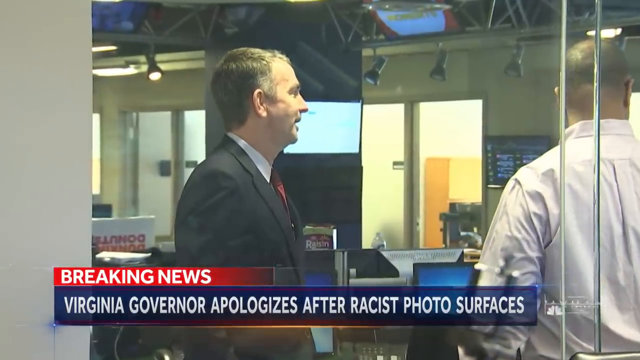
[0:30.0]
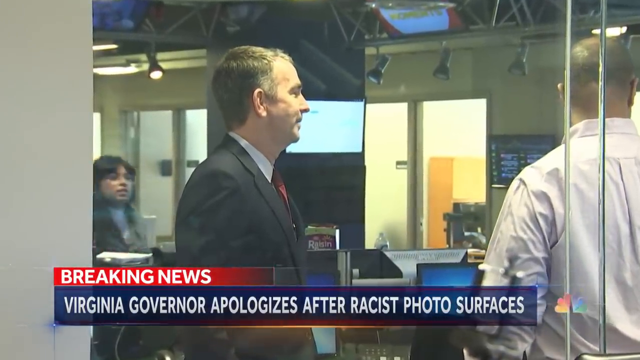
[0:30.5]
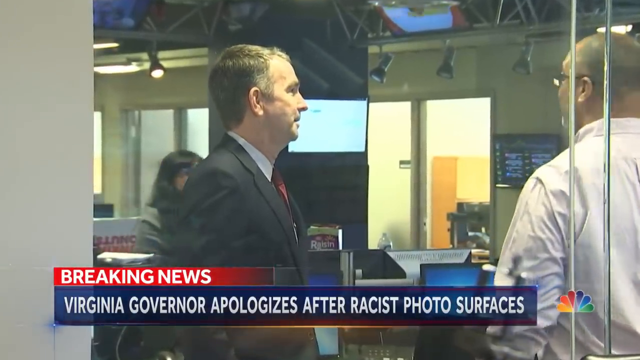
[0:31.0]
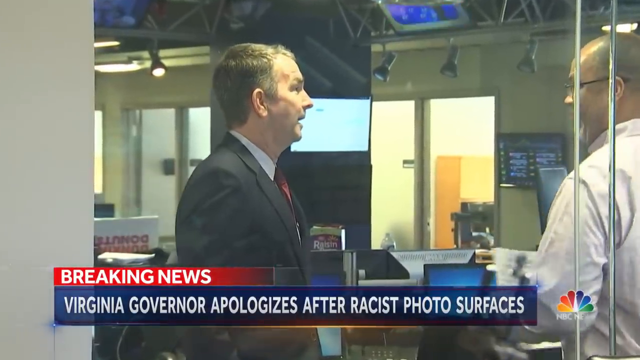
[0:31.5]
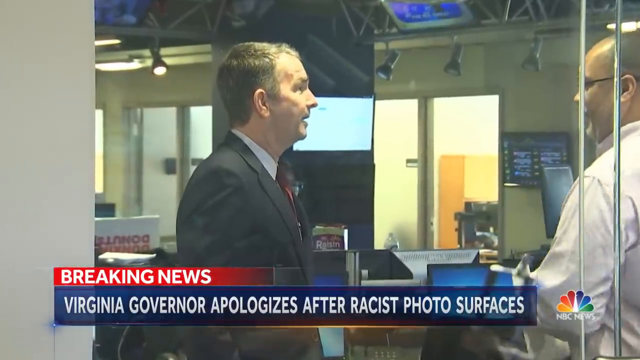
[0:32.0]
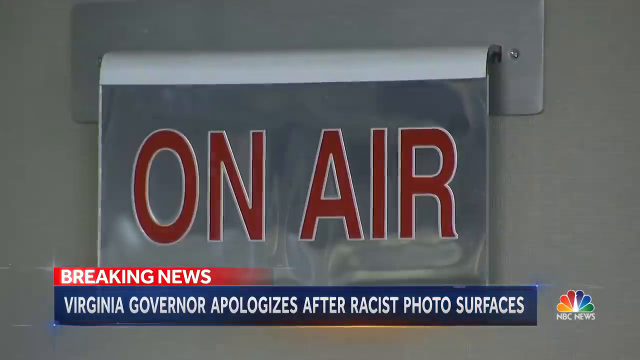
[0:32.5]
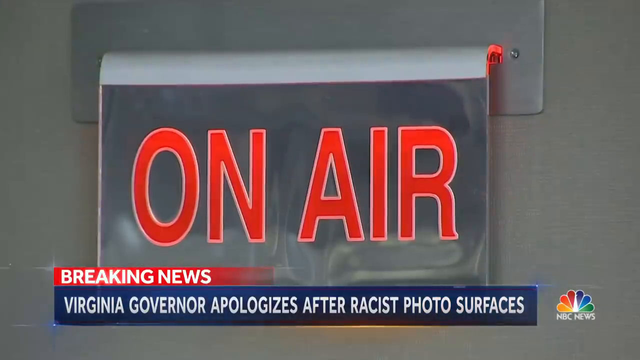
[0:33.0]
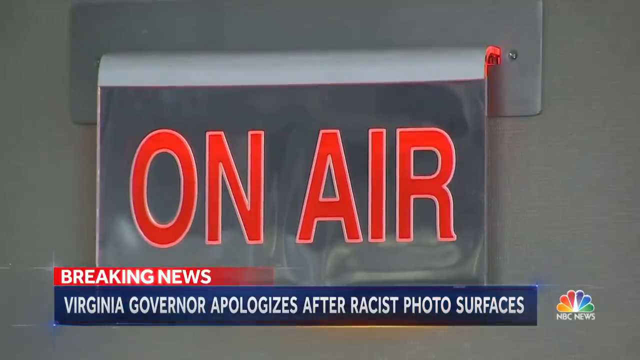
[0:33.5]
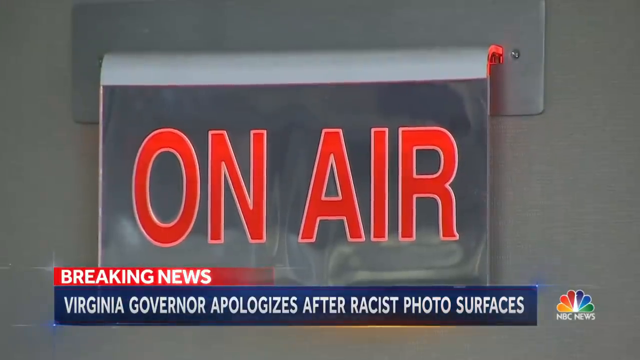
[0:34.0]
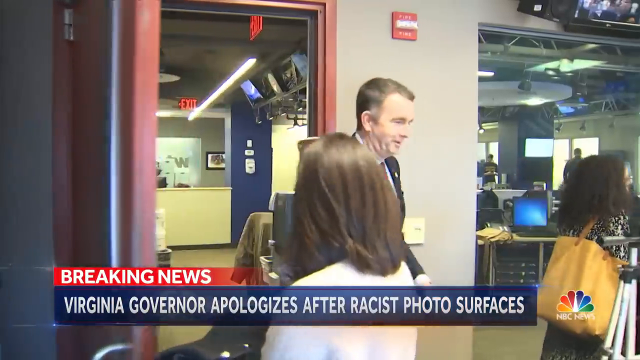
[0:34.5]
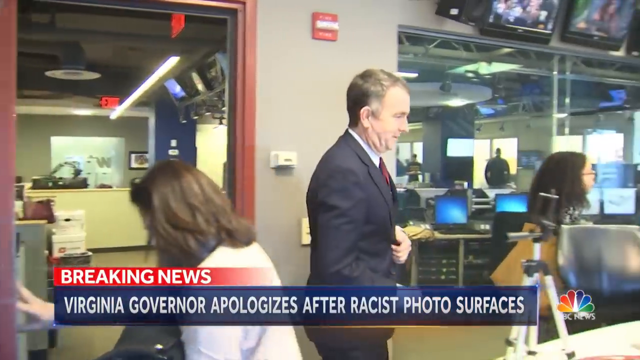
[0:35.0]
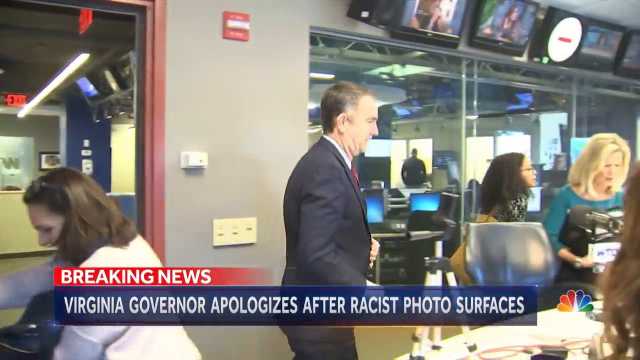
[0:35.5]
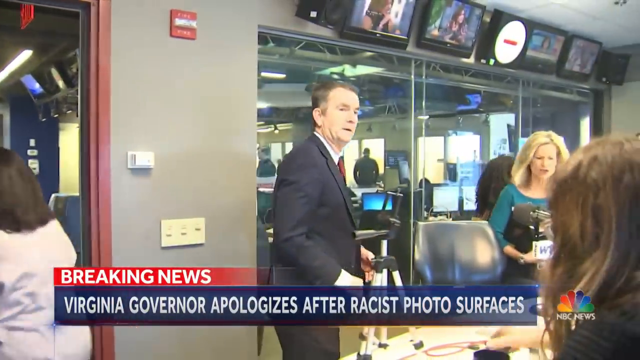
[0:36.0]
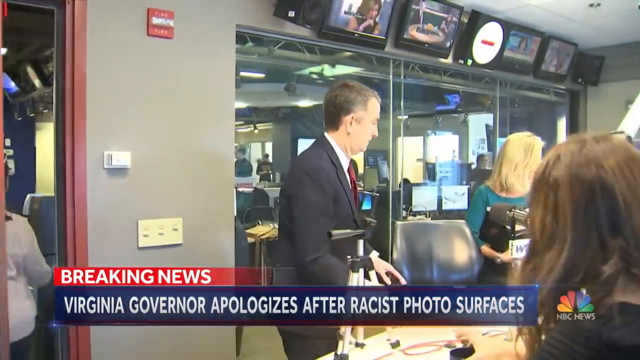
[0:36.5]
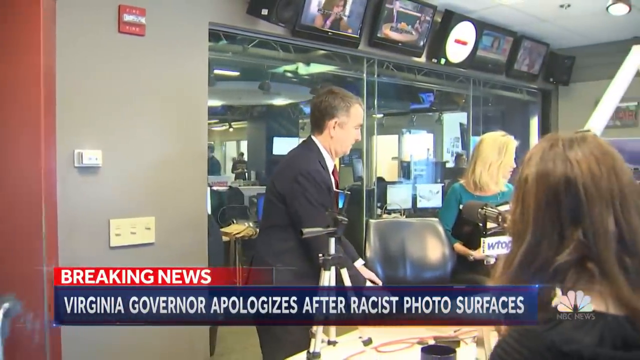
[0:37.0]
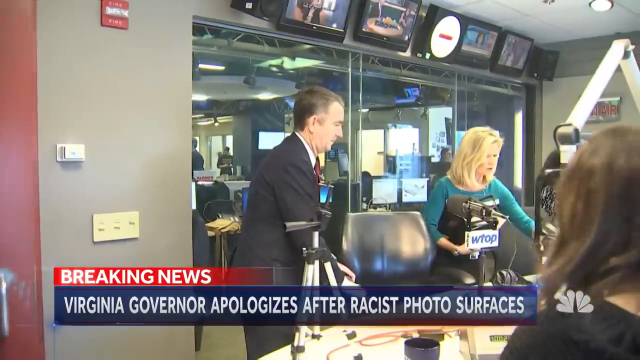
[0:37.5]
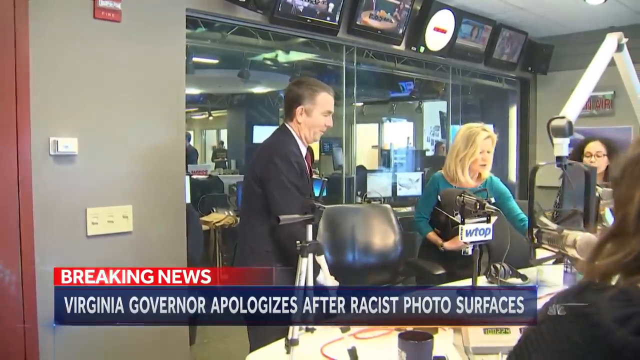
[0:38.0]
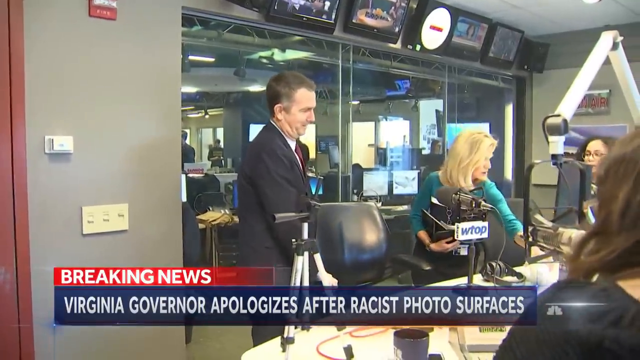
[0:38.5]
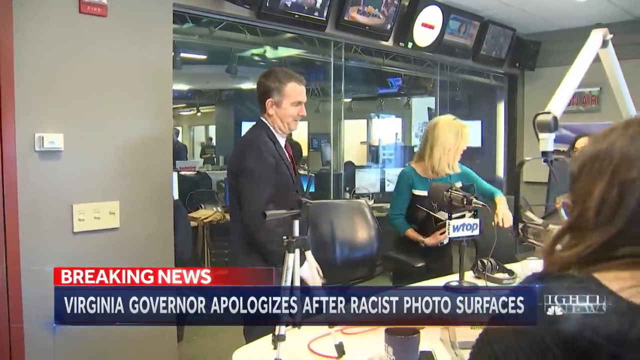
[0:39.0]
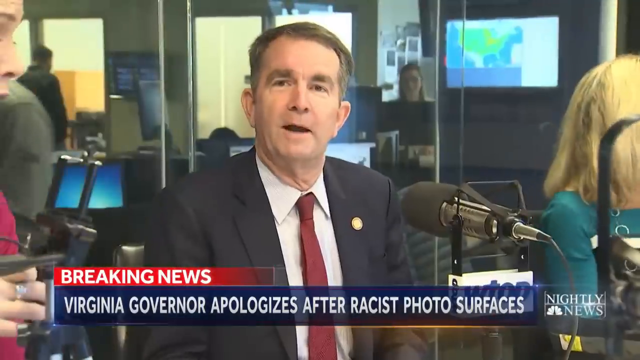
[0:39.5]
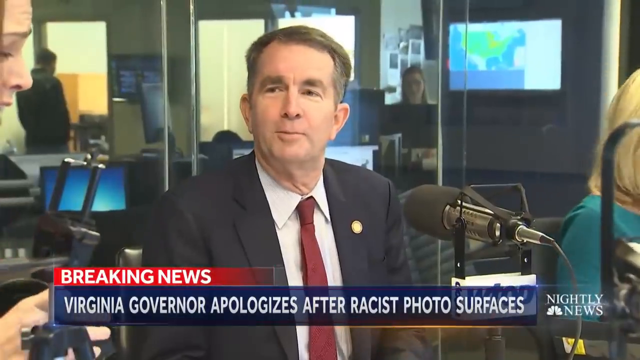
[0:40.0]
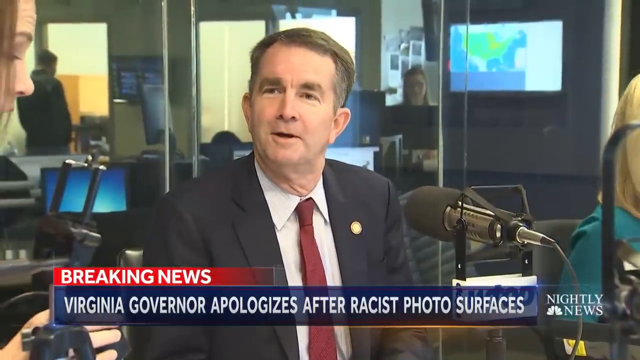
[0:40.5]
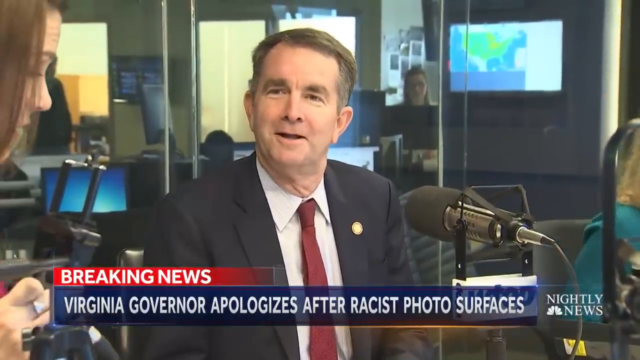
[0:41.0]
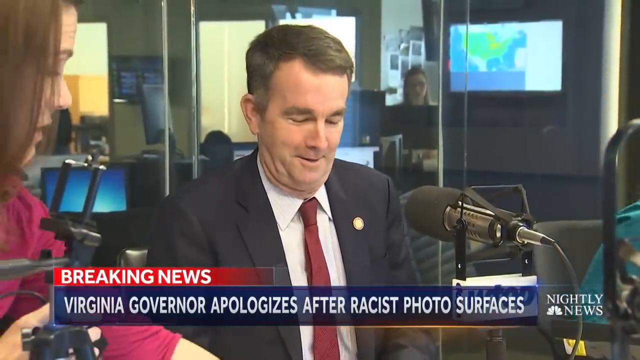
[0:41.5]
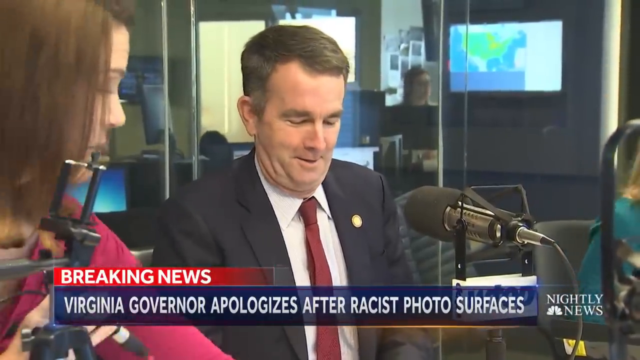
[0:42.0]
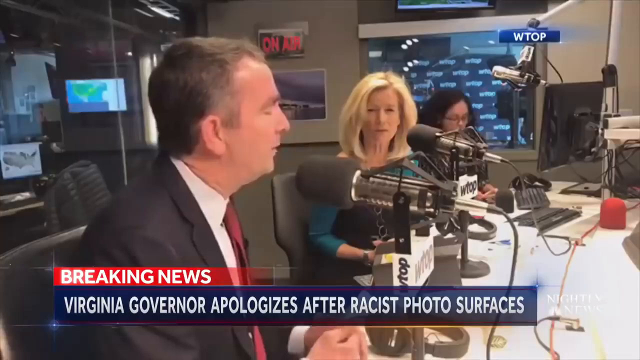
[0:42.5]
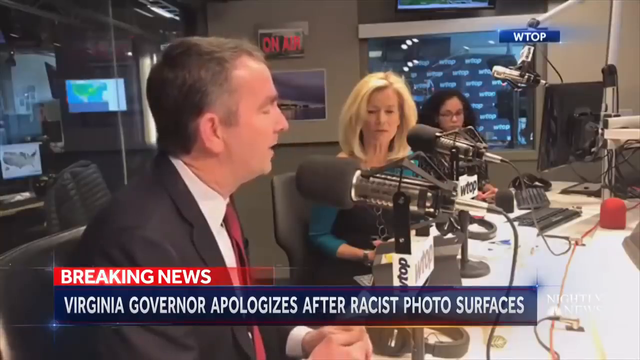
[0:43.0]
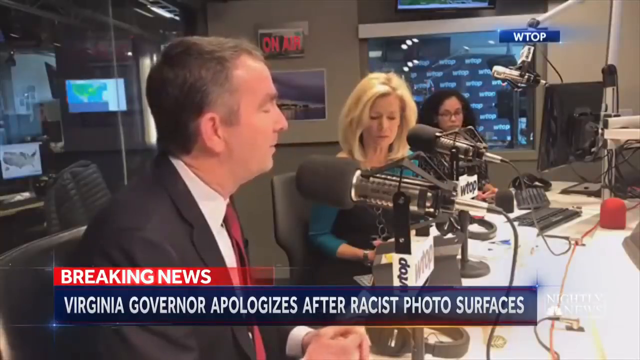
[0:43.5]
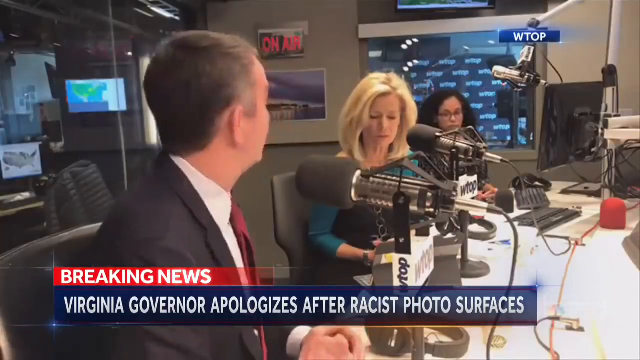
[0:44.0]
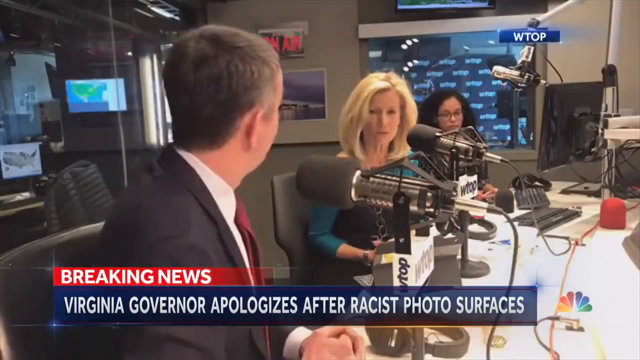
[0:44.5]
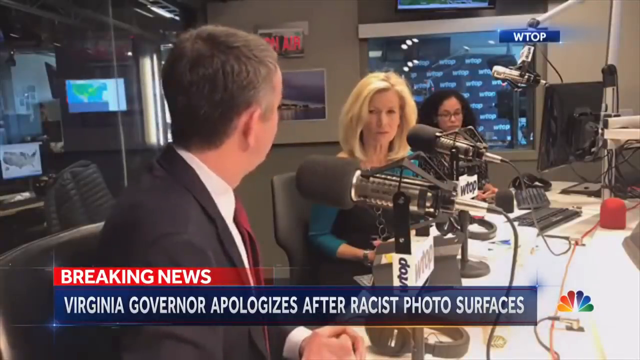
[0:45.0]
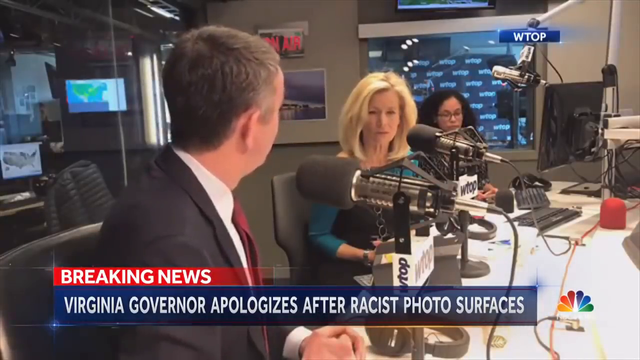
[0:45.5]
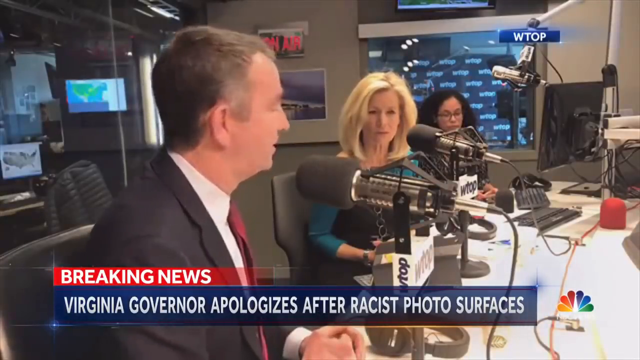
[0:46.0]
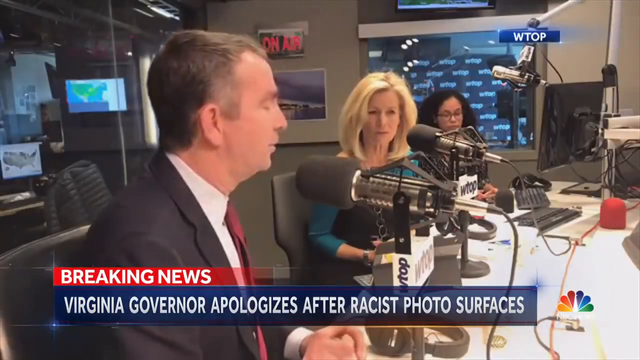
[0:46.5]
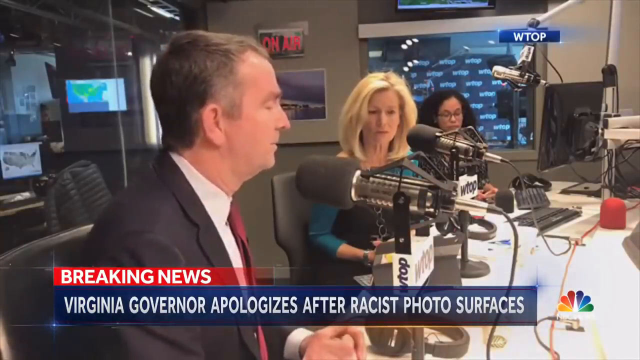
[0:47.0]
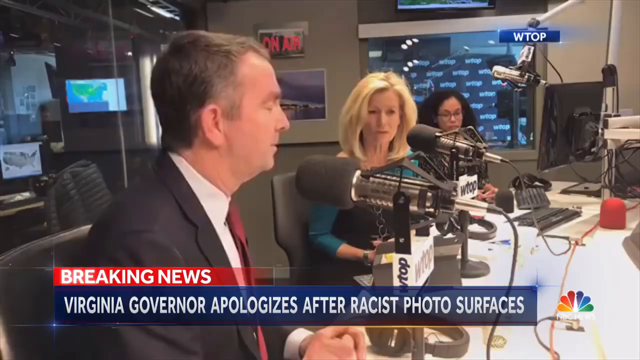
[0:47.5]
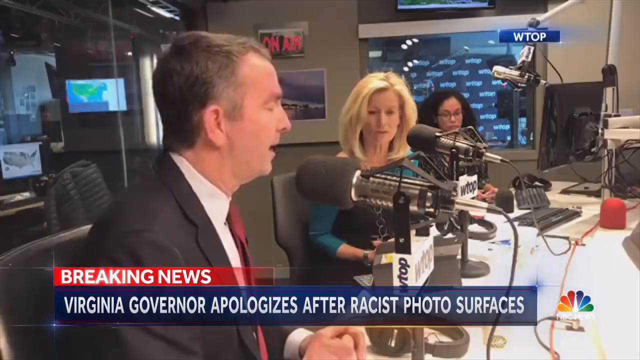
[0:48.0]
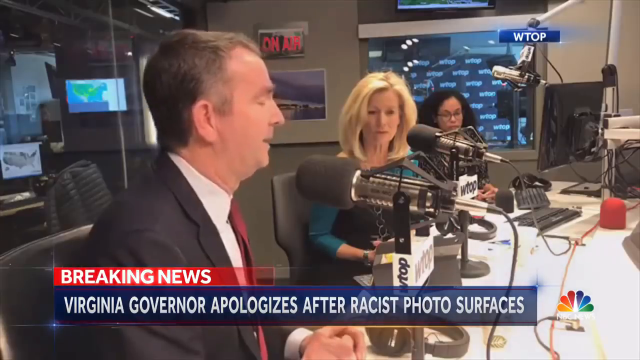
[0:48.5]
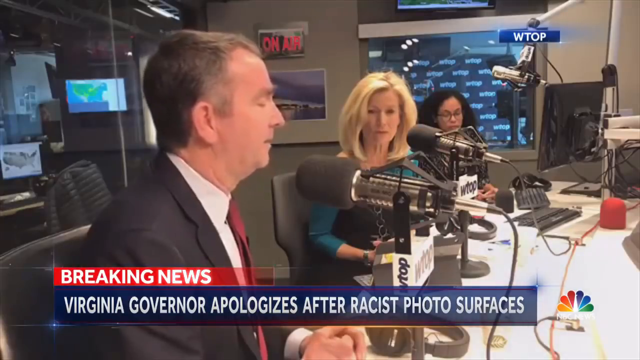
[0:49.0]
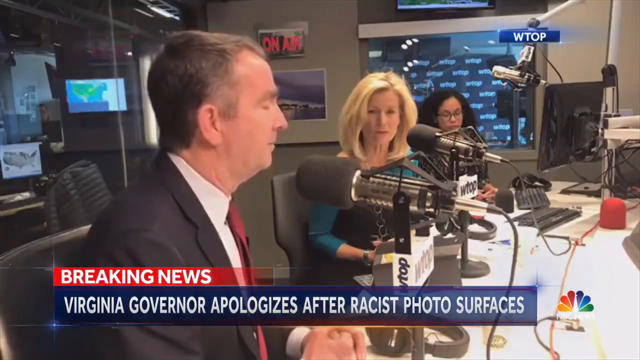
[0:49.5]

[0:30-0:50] A new segment shows the Virginia governor in side profile talking to a reporter in what looks like a newsroom or radio station. It cuts to a red on-air sign blinking, apparently indicating a radio station interview. The governor, in a suit and tie, walks into the radio booth with an assistant, and they set up for the interview. A label on one of the microphones reads "WTOP", apparently the station's name. A blonde woman, possibly one of the radio hosts, sets up the area, and a large glass wall behind the governor shows the station's newsroom. A close-up shows the governor sitting down and getting ready for the interview, looking very jovial. The scene then cuts to him looking more serious, with two women close to him; all of them have mics, and the two women listen while the governor talks.